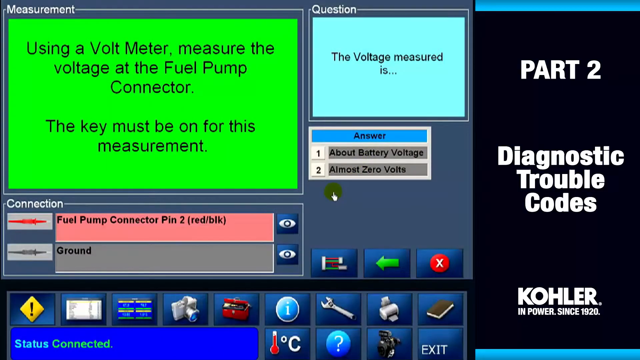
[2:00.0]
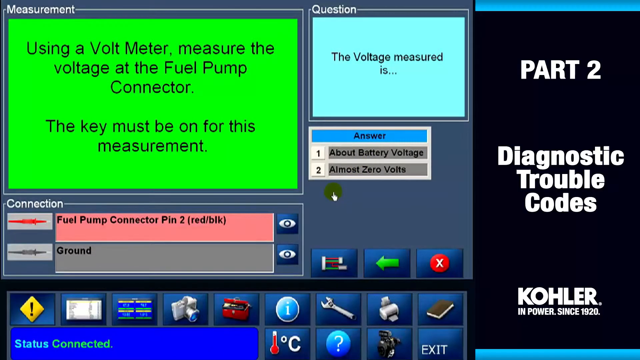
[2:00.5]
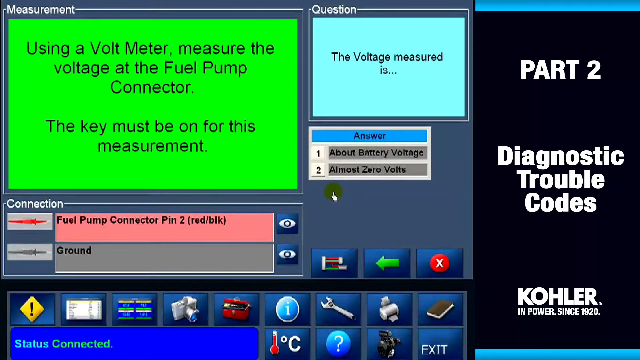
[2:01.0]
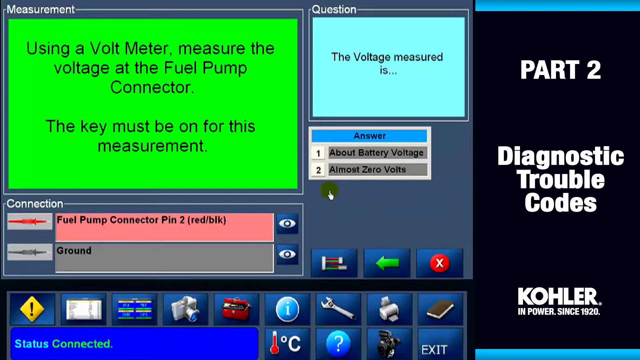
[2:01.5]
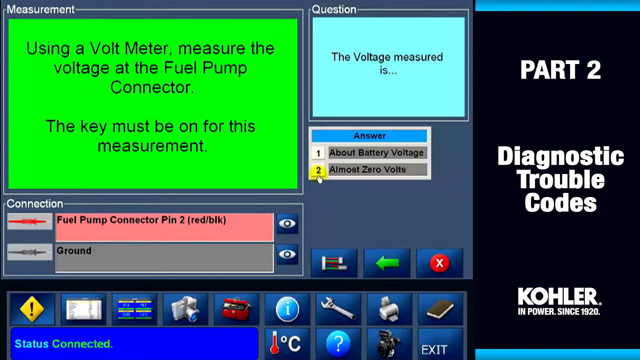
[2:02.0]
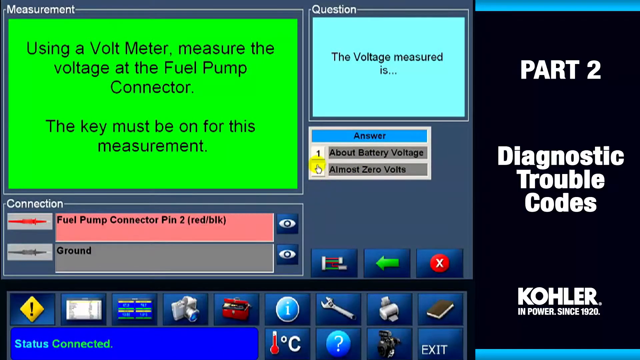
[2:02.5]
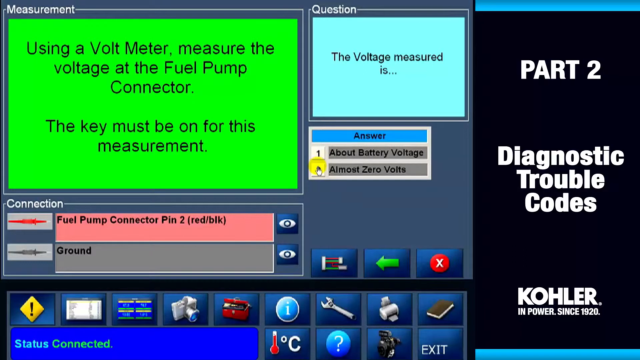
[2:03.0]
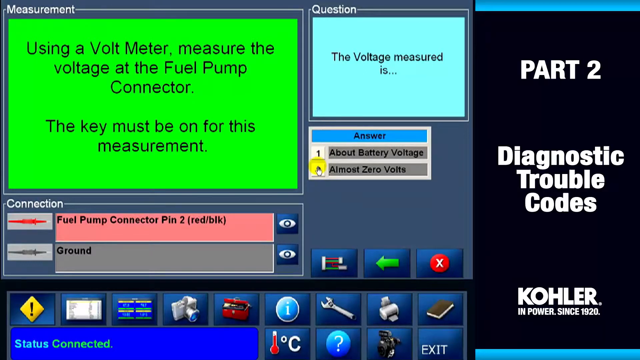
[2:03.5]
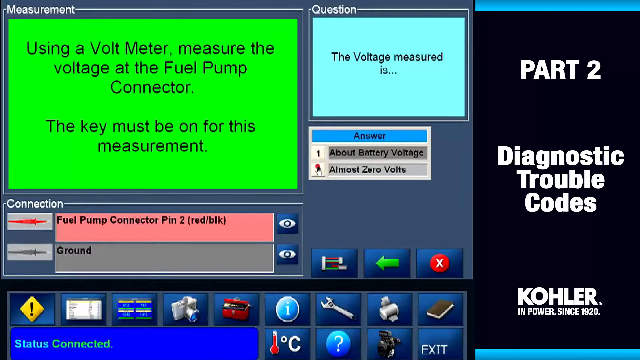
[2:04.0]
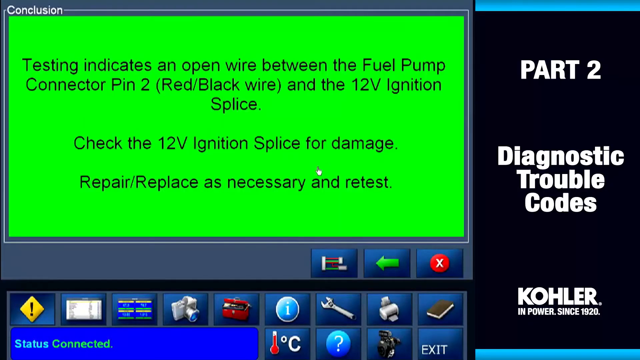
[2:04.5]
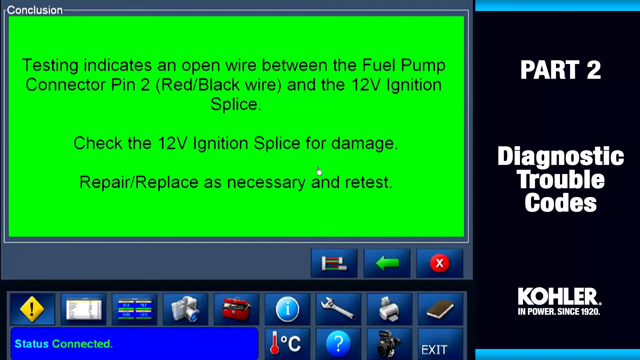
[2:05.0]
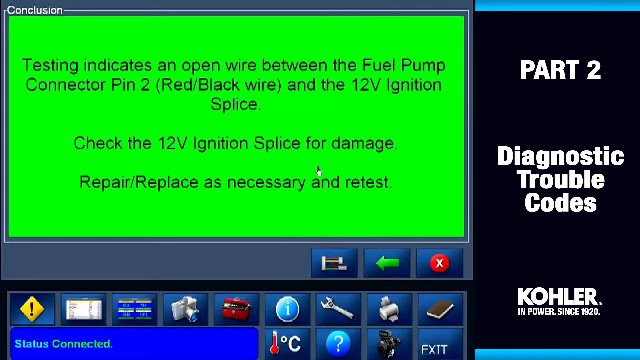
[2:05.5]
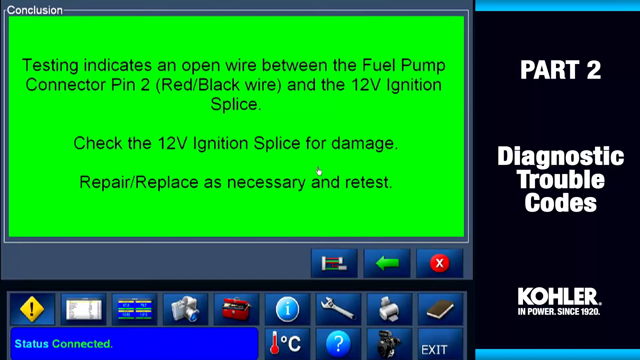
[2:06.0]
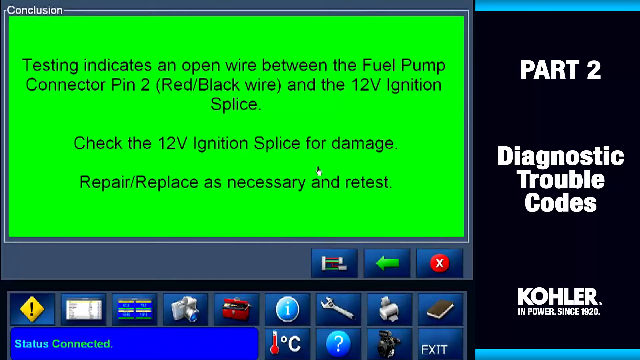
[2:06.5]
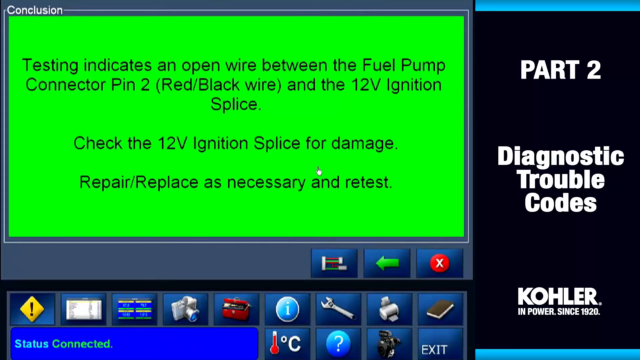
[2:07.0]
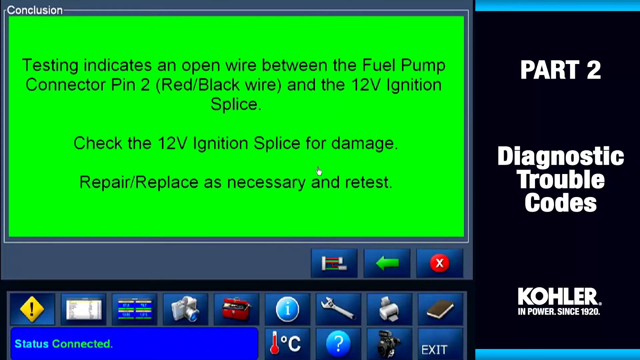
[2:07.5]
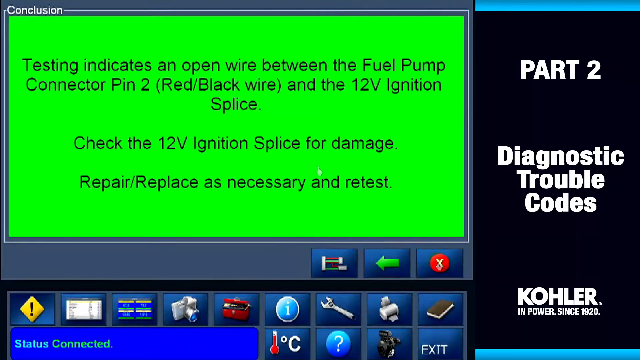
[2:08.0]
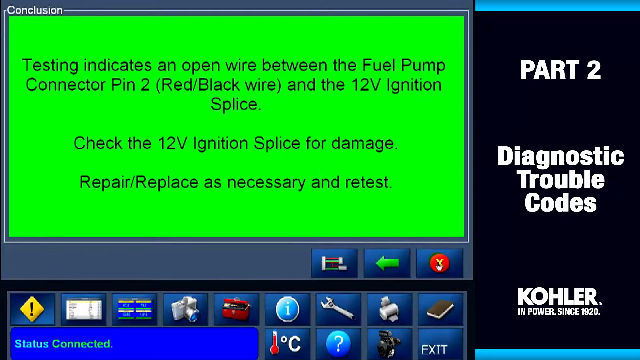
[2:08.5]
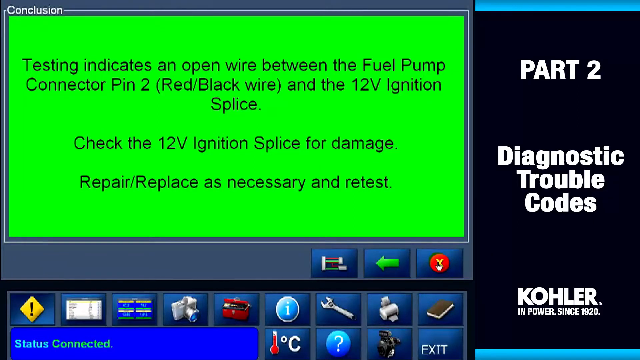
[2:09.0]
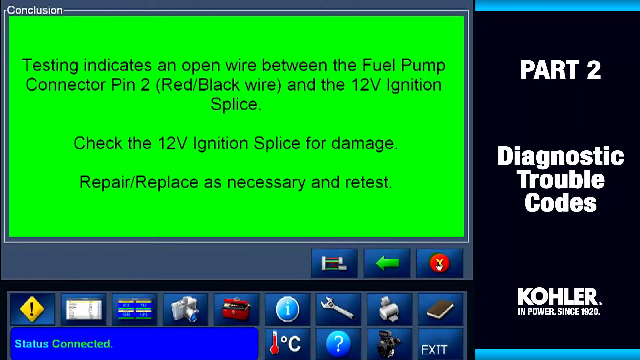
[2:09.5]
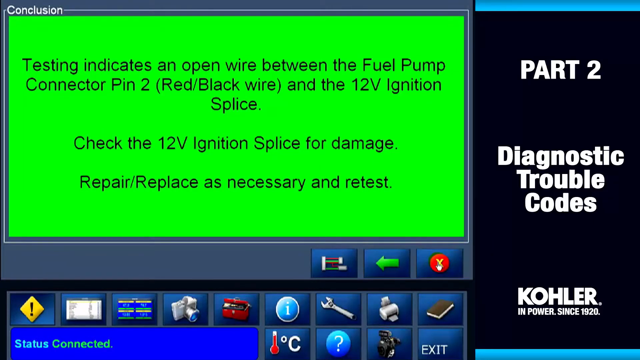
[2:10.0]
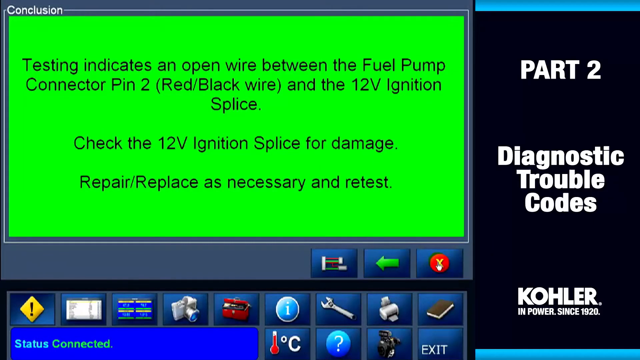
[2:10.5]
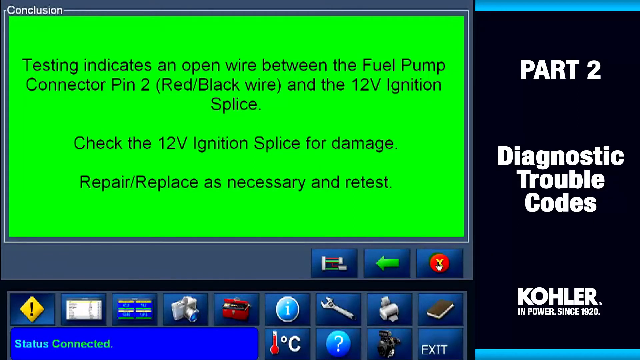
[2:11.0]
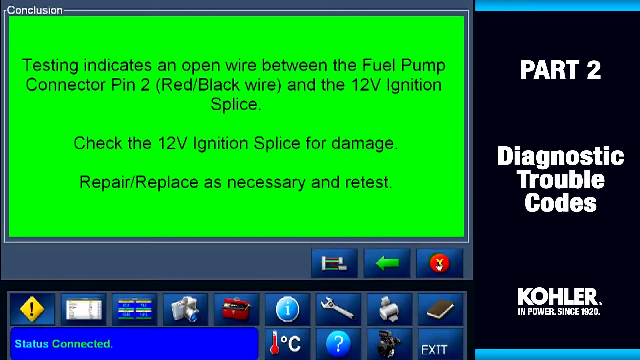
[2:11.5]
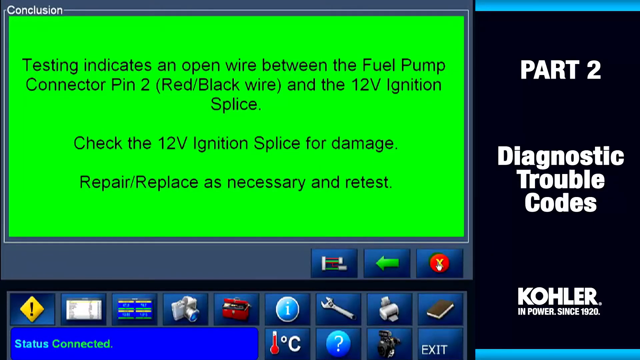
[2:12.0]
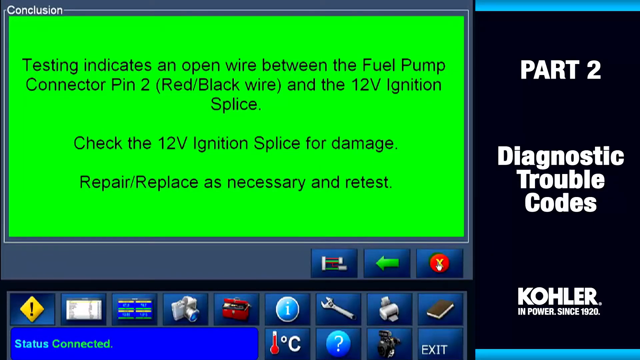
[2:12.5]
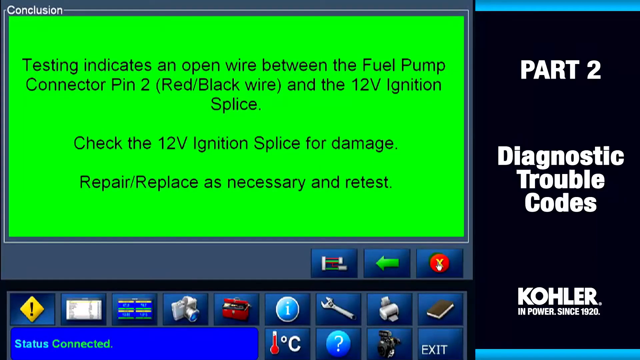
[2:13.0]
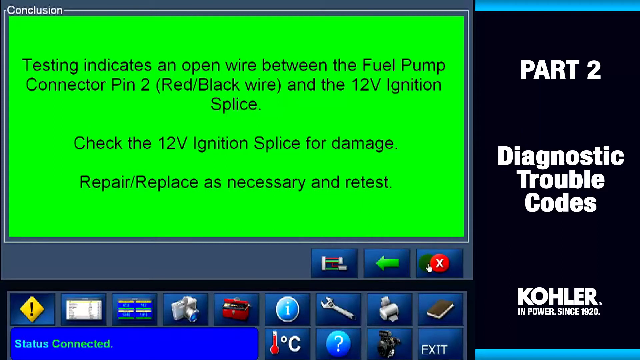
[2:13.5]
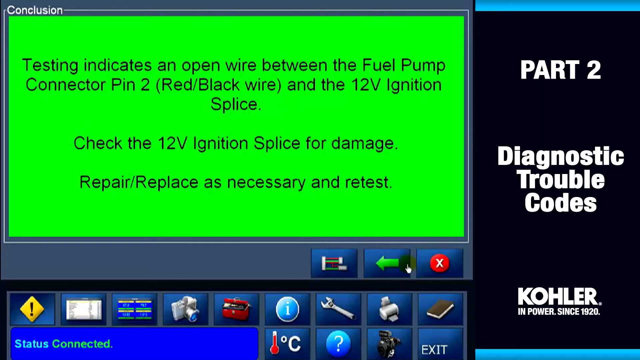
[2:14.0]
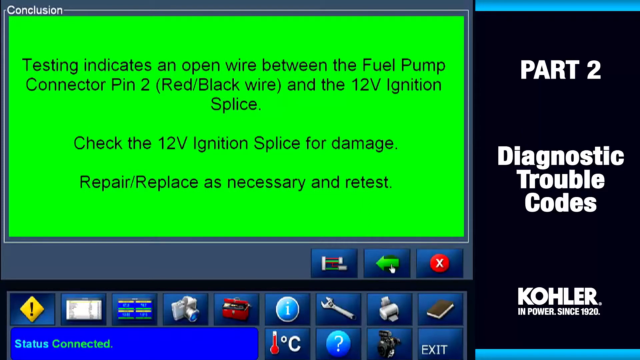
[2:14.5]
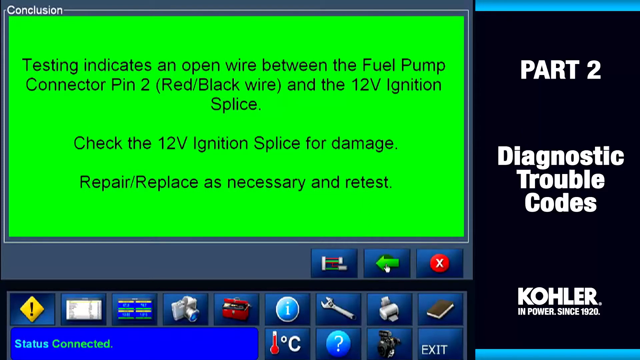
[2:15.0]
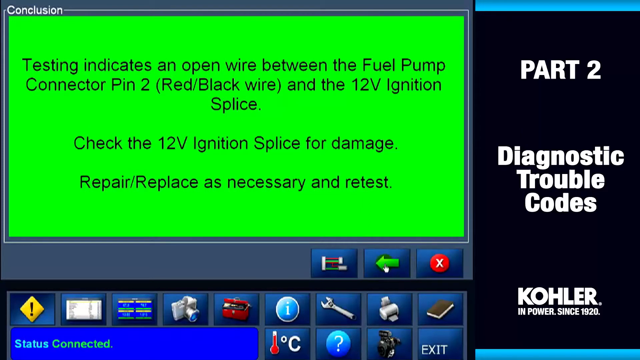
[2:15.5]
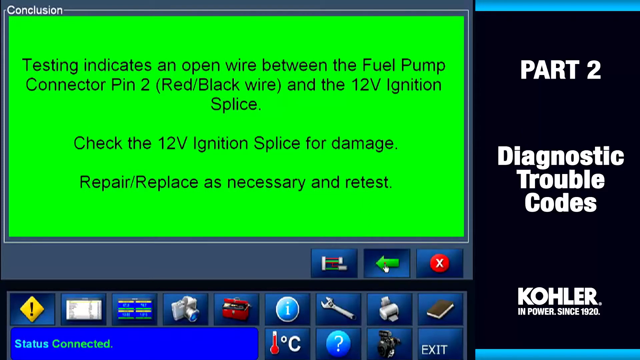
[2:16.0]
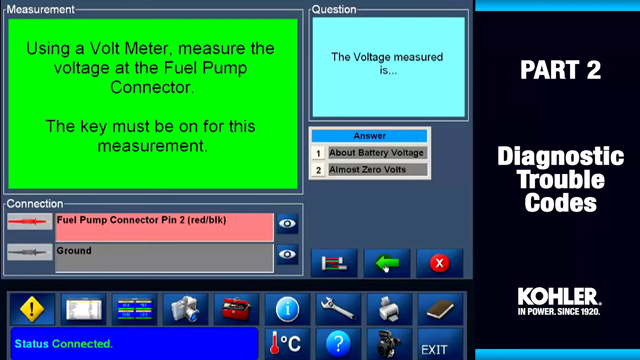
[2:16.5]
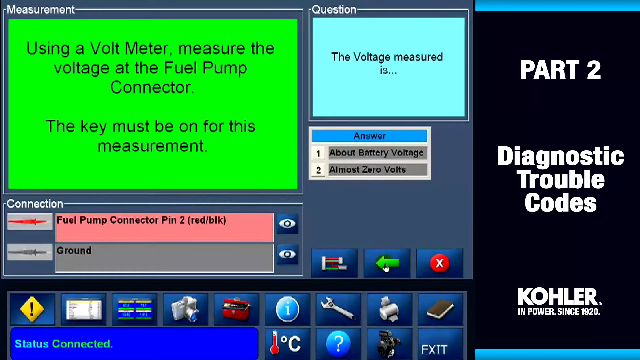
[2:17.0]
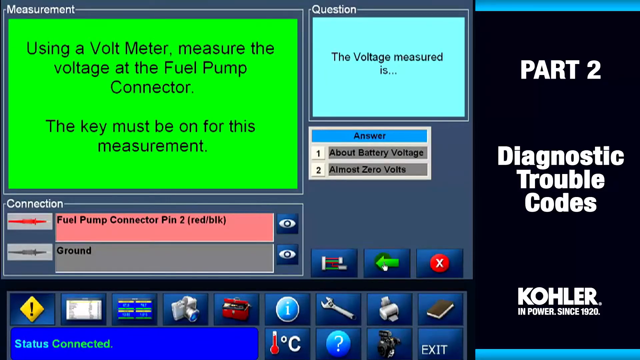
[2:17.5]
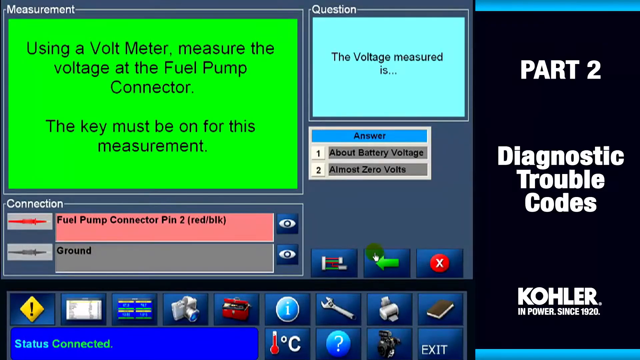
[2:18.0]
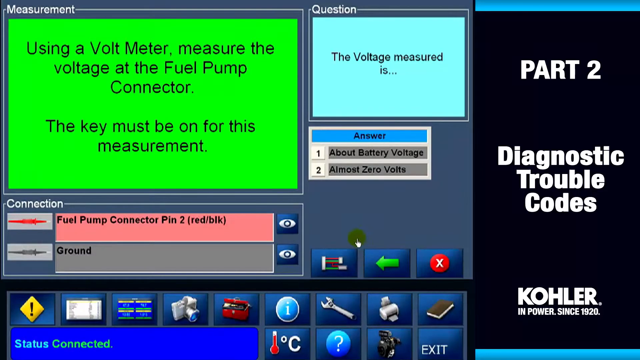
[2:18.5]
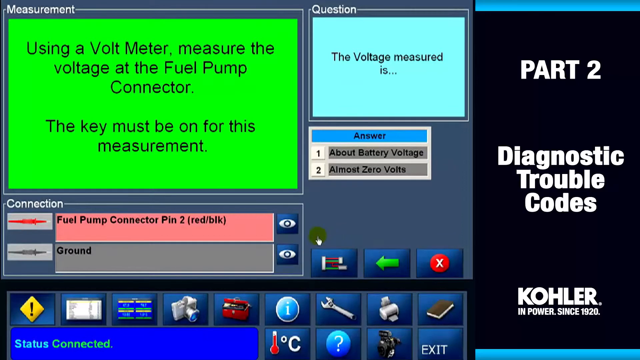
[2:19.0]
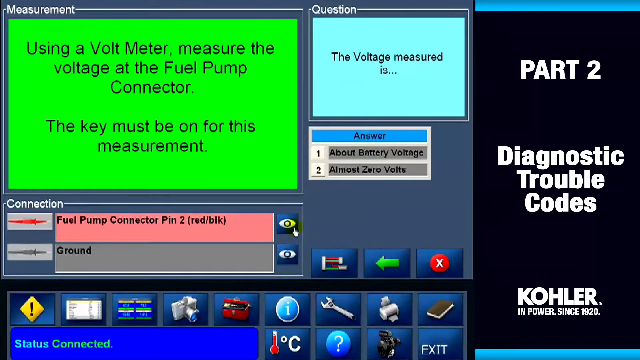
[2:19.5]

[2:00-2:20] A screen reads "Measurement" and "Use a volt meter. Measure the voltage at the fuel pump connector. The key must be on for this measurement." It also reads "Fuel pump connector pin to red, black, ground" and "The voltage measure is". A "Conclusion" screen reads "Testing indicates an open wire between the fuel pump connector" and "the 12V ignition splice", followed by "Check the 12V ignition splice for damage. Repair or replace as necessary". The words are black on a lime green screen. The view then returns to the regular "Measurement" screen.